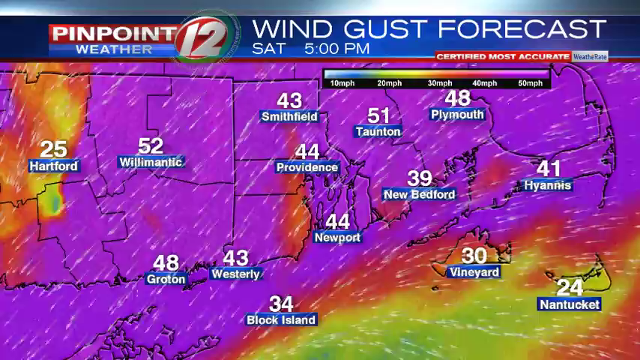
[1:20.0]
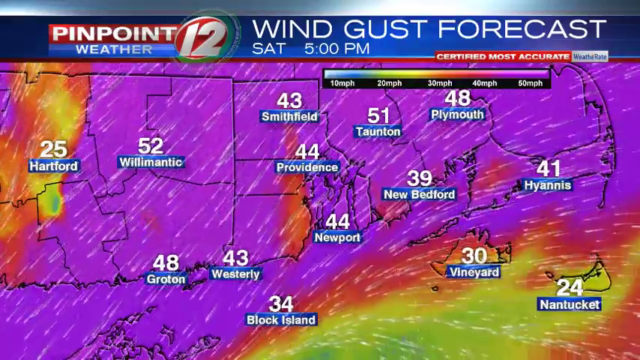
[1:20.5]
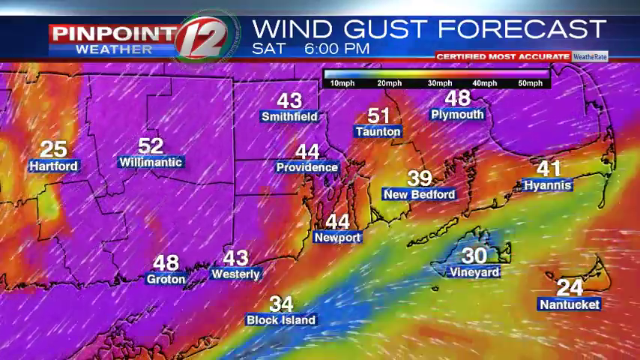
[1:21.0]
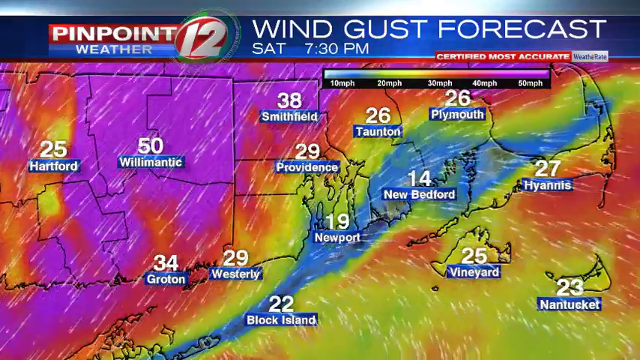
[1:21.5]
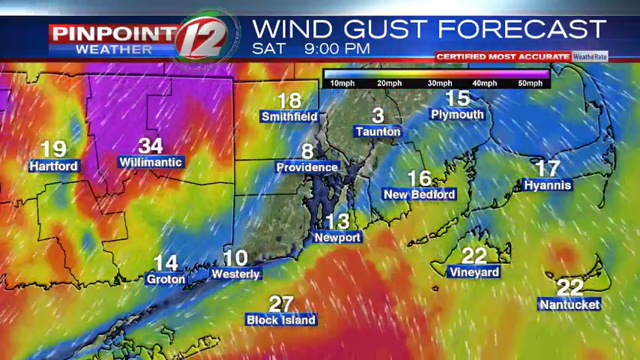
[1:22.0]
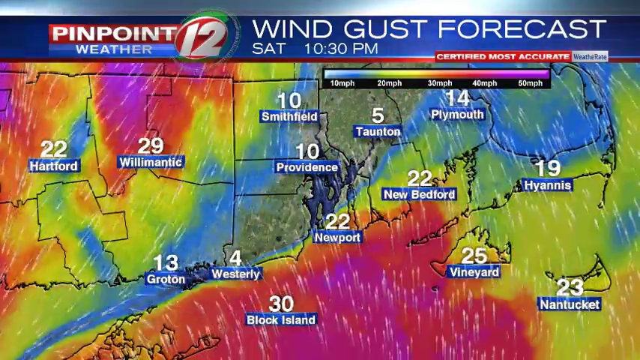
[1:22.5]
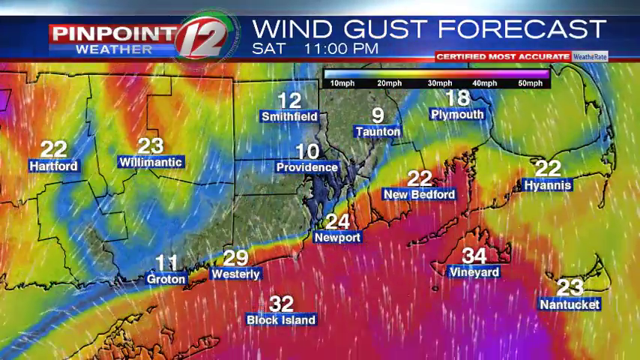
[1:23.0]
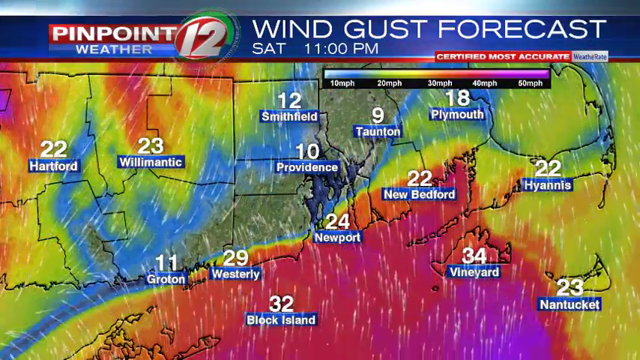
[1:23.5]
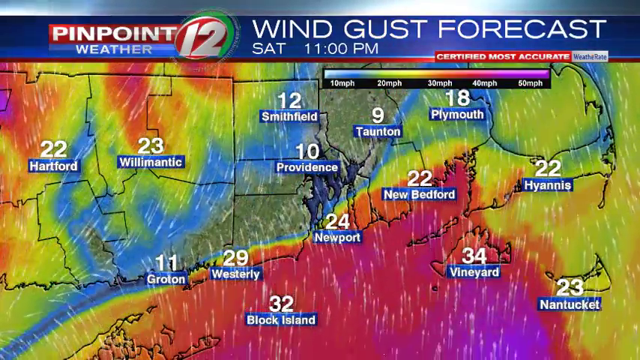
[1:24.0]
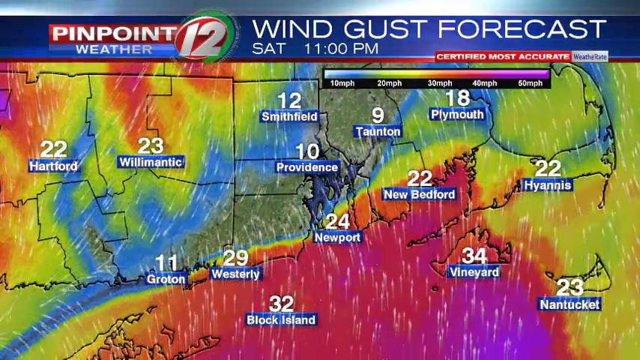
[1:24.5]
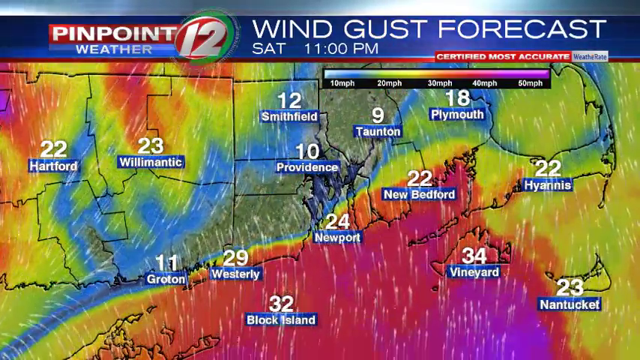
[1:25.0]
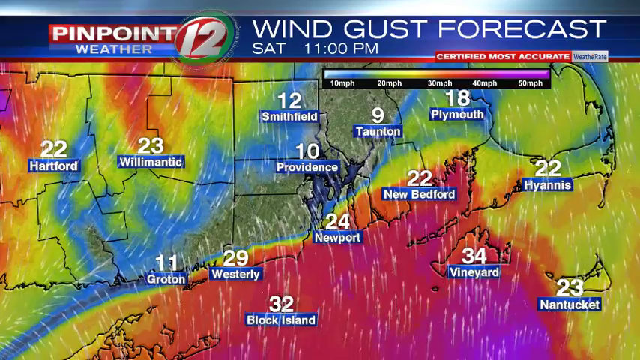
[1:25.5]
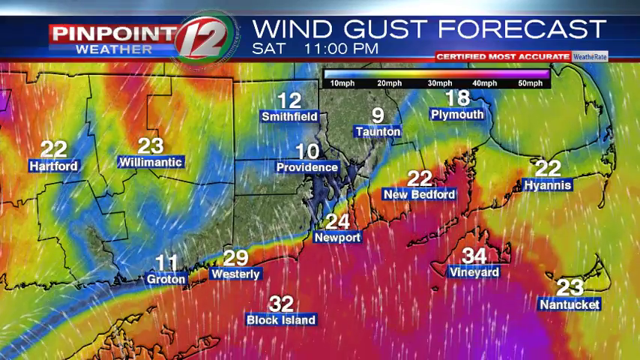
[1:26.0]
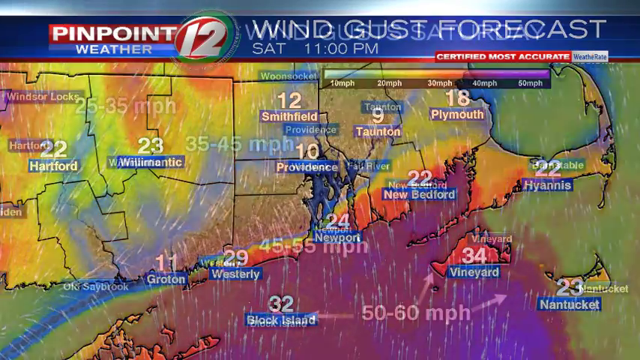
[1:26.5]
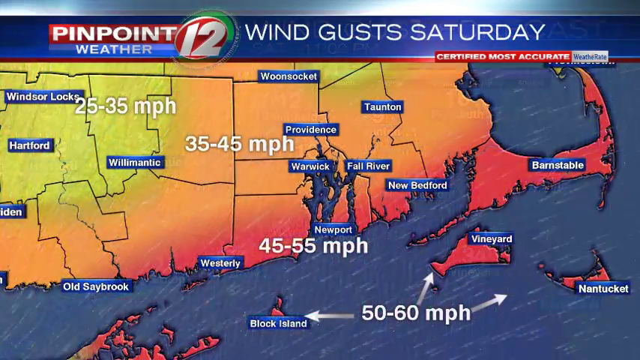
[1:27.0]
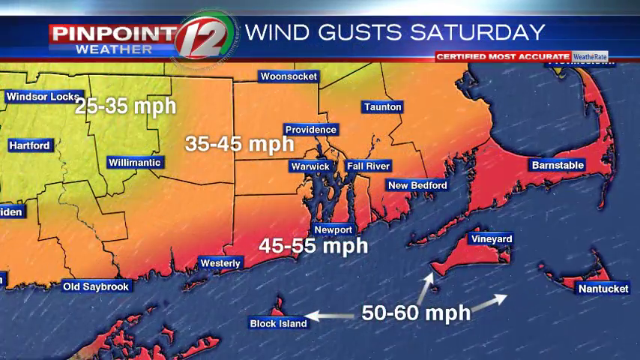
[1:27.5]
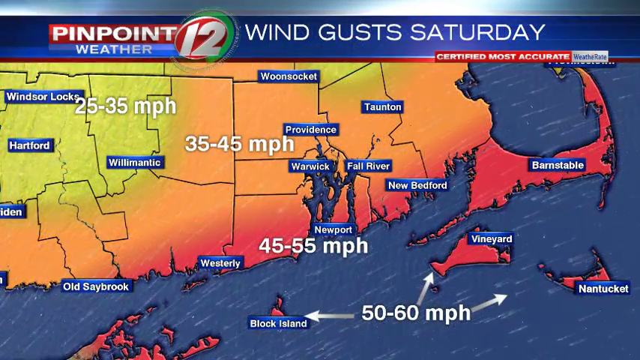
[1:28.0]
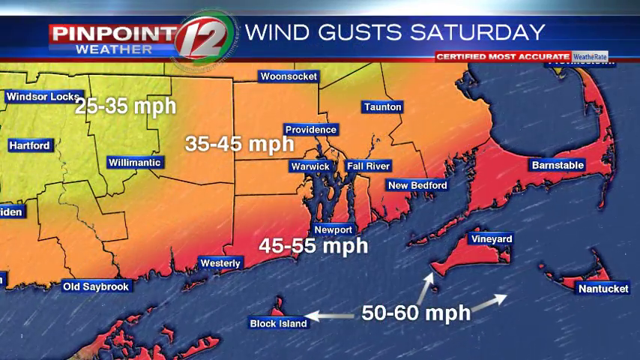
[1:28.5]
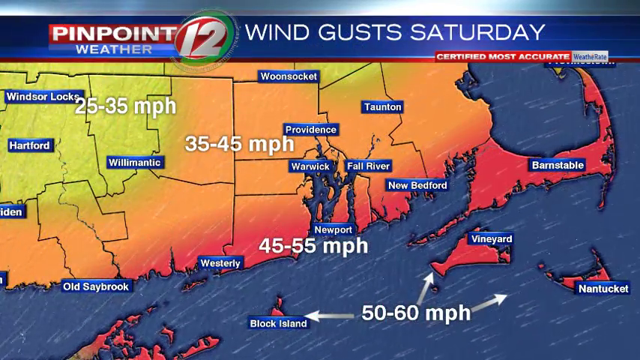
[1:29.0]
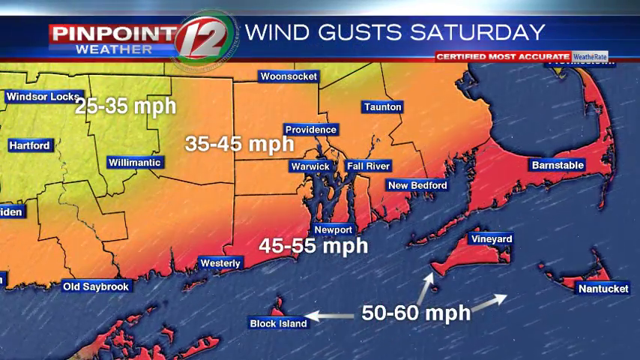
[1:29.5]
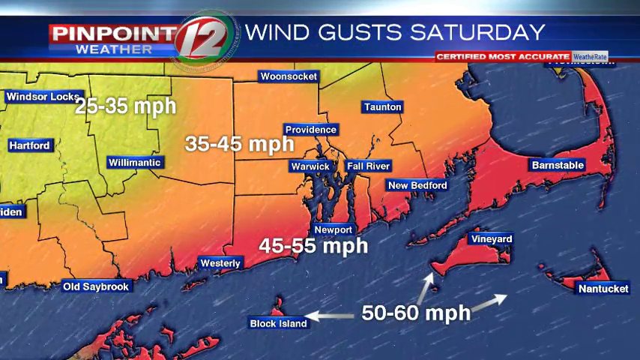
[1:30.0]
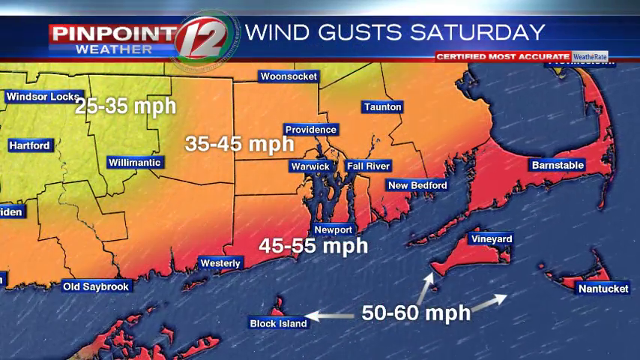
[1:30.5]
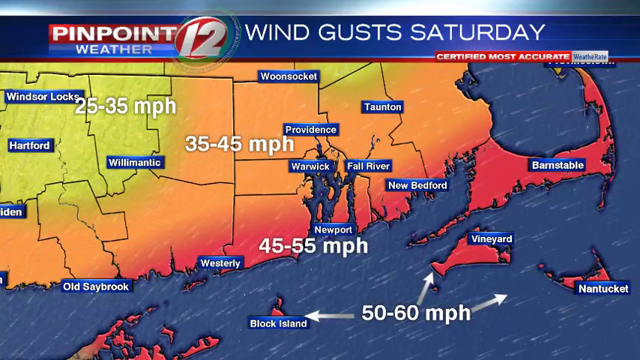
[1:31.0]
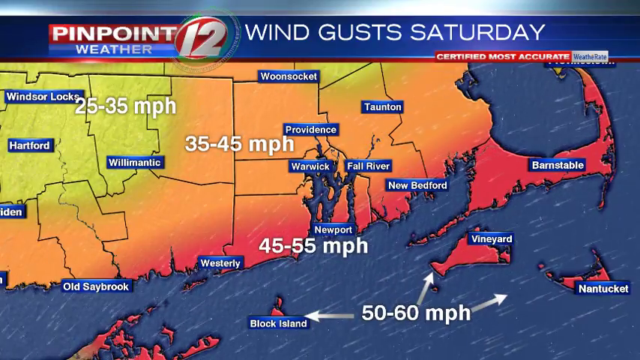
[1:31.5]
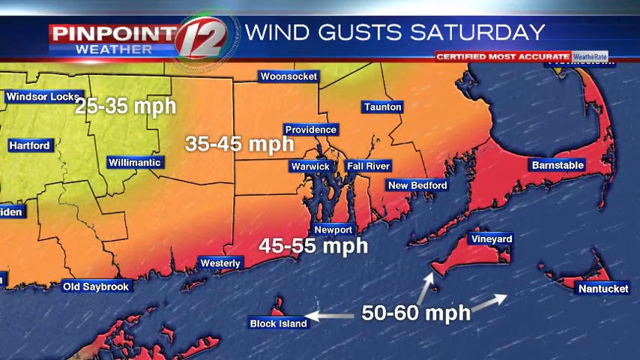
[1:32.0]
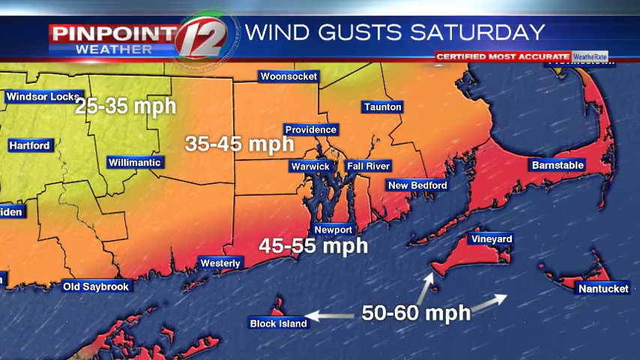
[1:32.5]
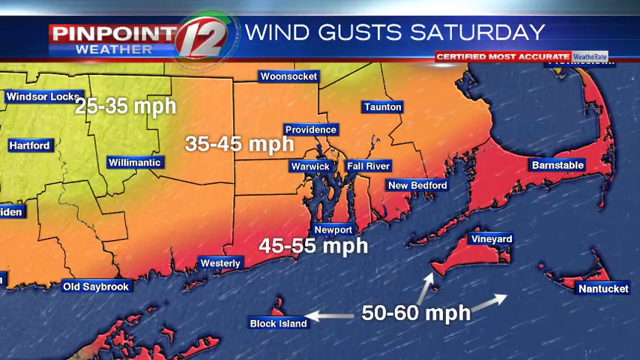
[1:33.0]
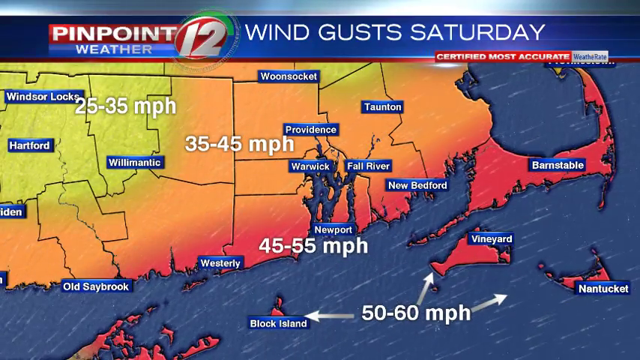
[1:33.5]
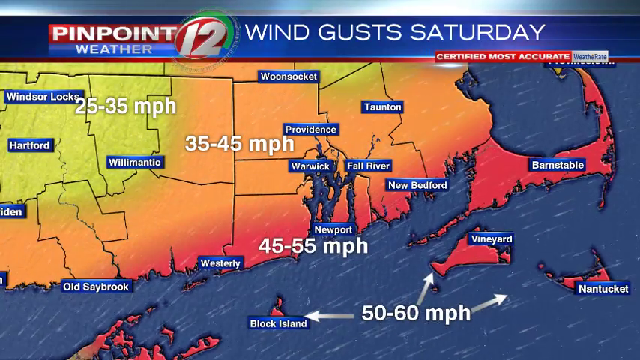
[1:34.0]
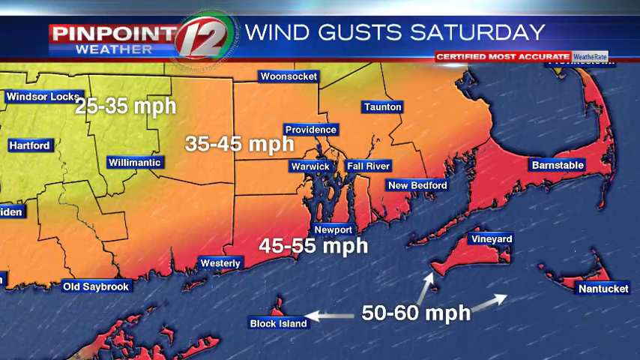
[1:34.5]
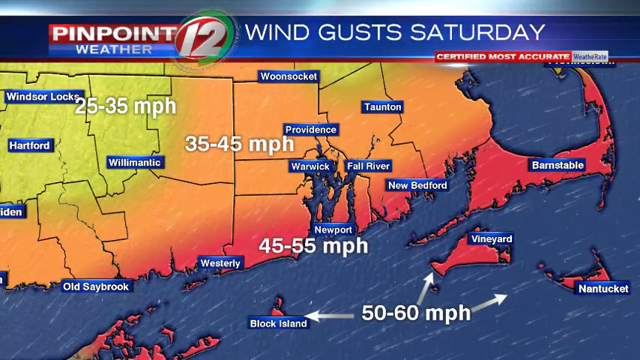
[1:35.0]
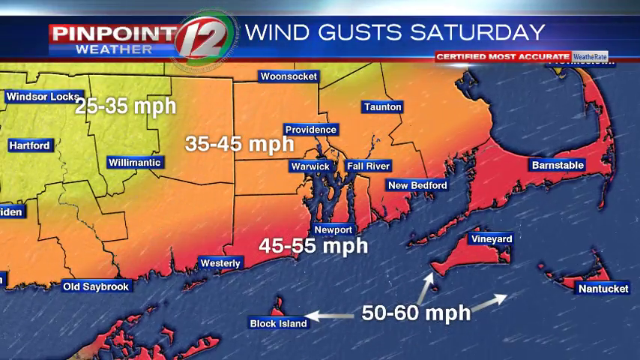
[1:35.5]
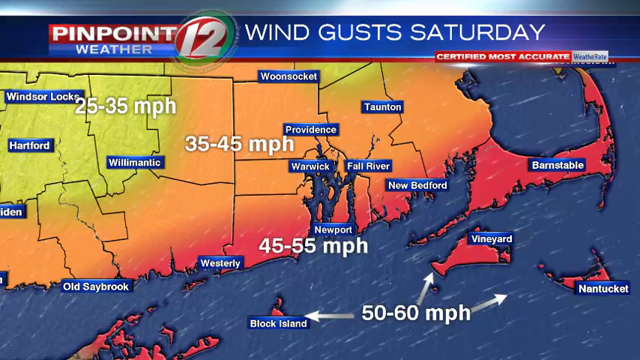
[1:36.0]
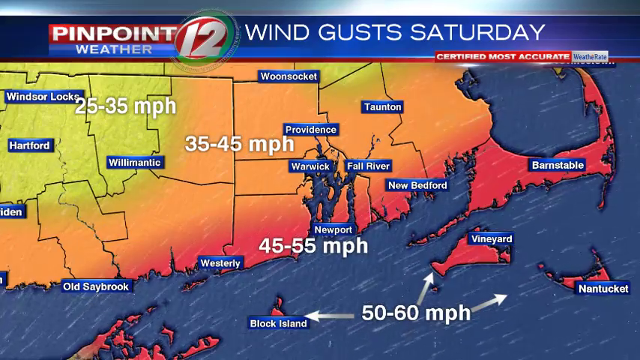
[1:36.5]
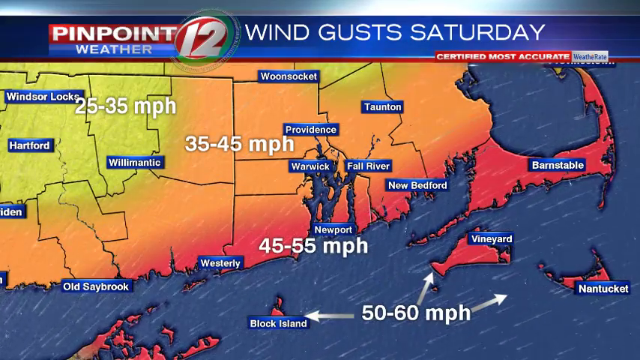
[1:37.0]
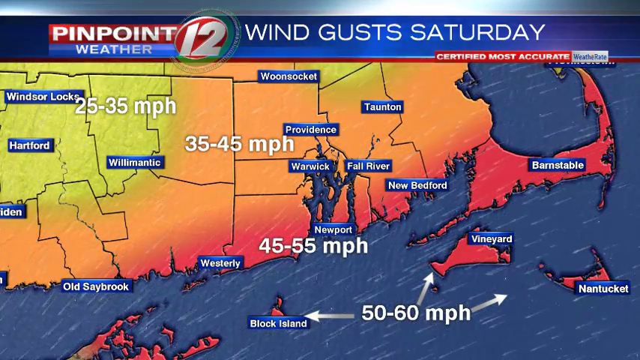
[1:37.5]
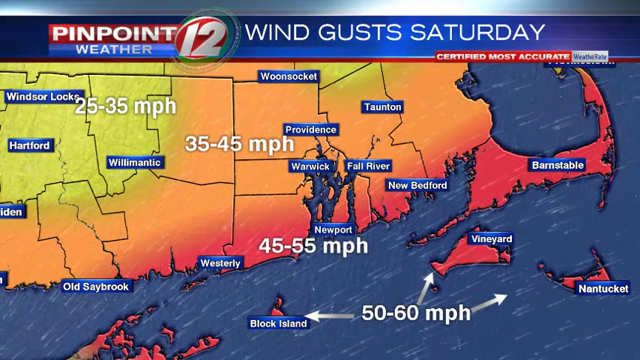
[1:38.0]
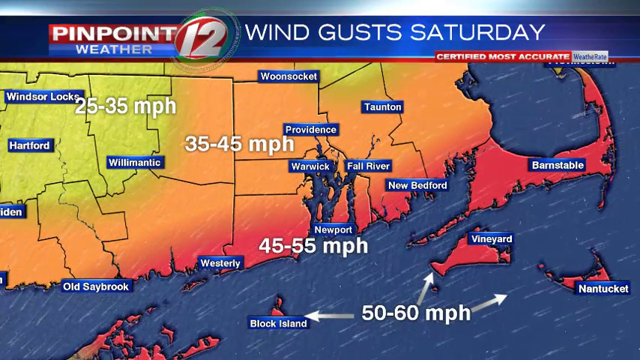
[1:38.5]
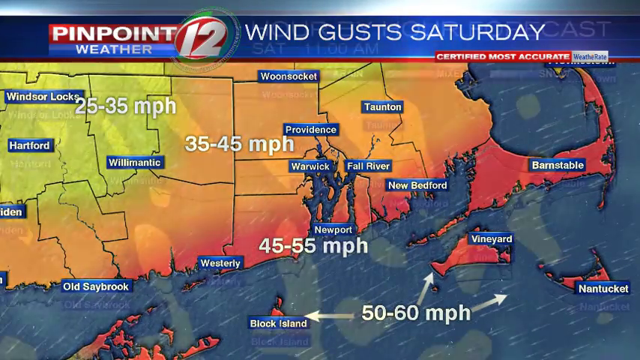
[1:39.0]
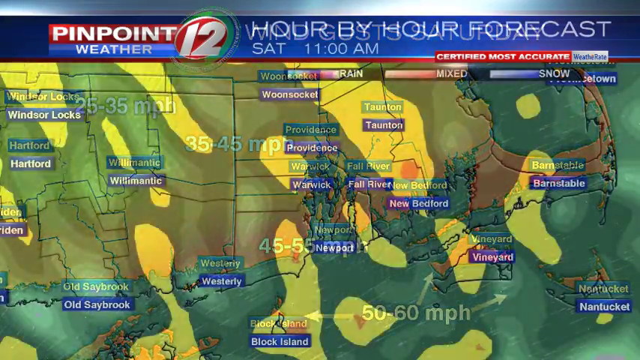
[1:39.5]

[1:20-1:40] A map of the southern part of New England has a purple background with areas of orange, yellow, and some light green over it. Each color indicates a different wind gust speed, purple being the strongest at 50 miles per hour and green around the 20 mile per hour mark. Several towns across the region are labeled, each with a number above its name indicating the wind gust speed. The colors gradually shift northward and change, with more light blues appearing, indicating wind gusts of 10 miles an hour or less. The white streaks change as well, now coming mostly from the south and heading directly north. Another map of the southern part of New England follows, largely colored in red, orange, and yellow. The top reads "wind gust Saturday." Yellow marks 25 to 35 miles per hour, orange 35 to 45 miles per hour, and darker orange 45 to 55 miles per hour. At the bottom of the screen, across the Atlantic Ocean, white text reads "50 to 60 miles per hour." Arrows point to Block Island, Martha's Vineyard, and Nantucket.